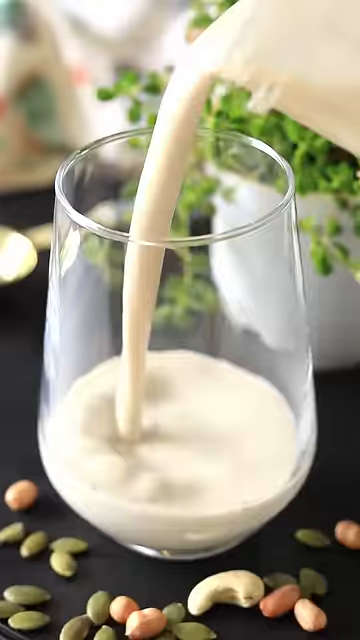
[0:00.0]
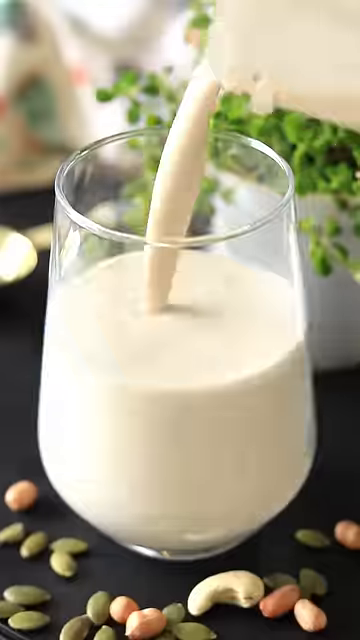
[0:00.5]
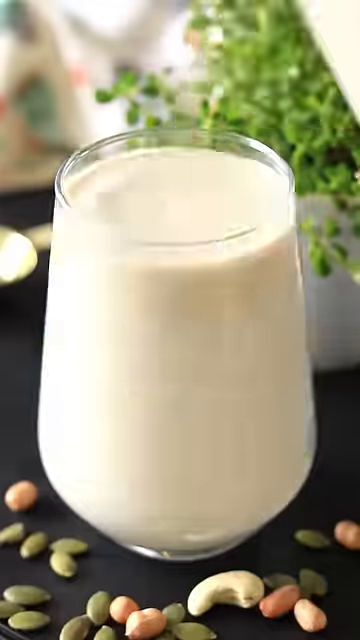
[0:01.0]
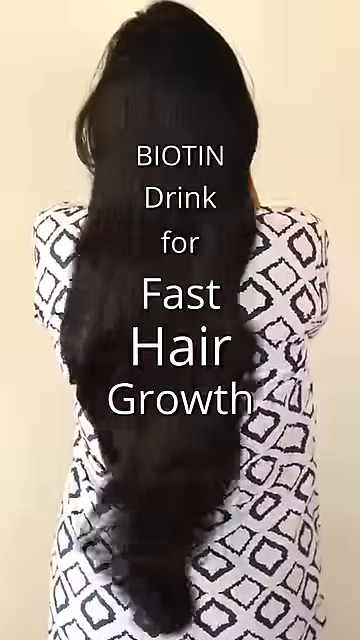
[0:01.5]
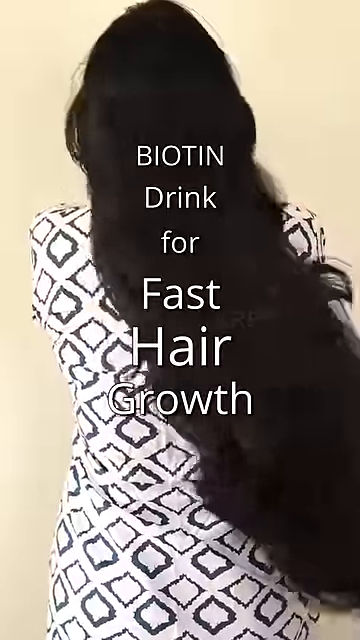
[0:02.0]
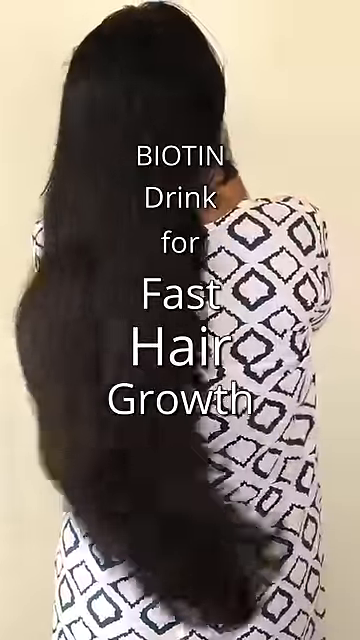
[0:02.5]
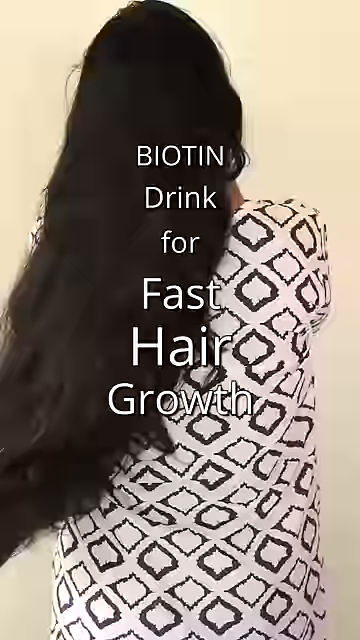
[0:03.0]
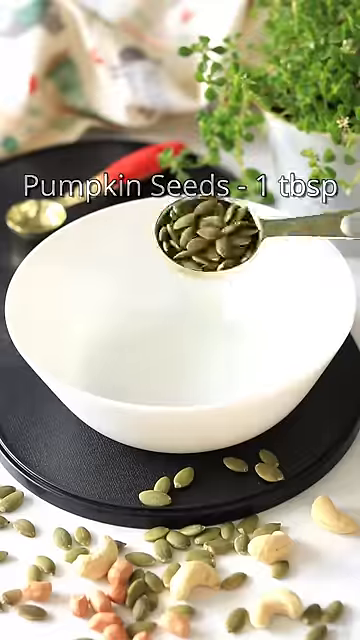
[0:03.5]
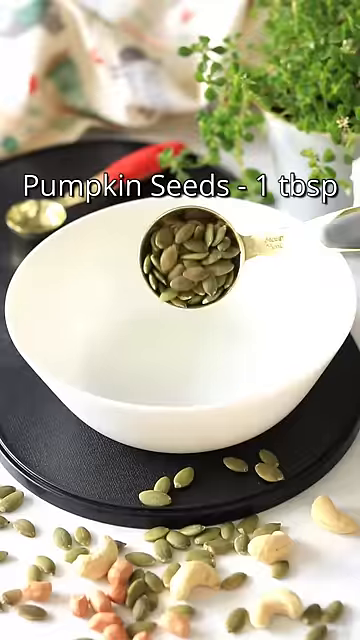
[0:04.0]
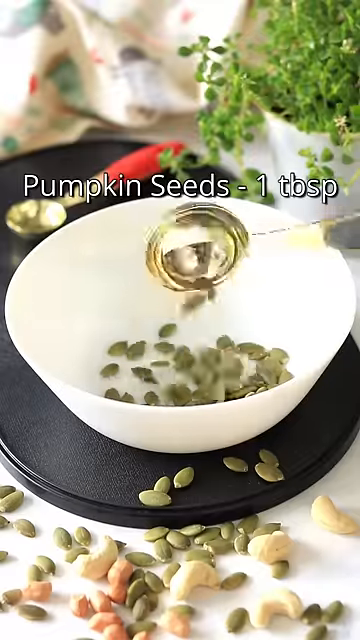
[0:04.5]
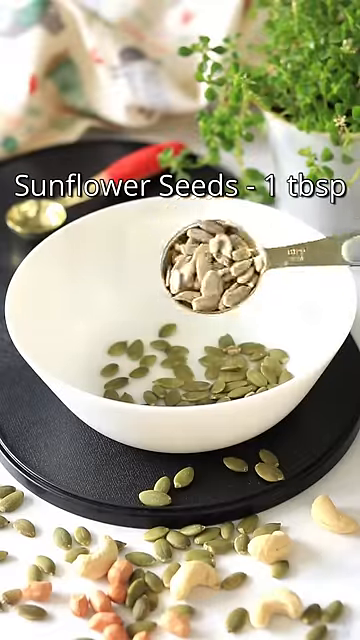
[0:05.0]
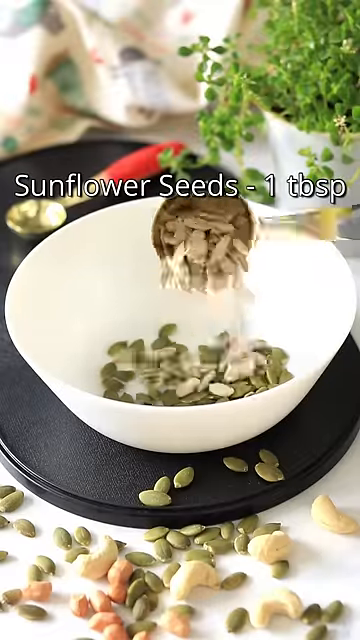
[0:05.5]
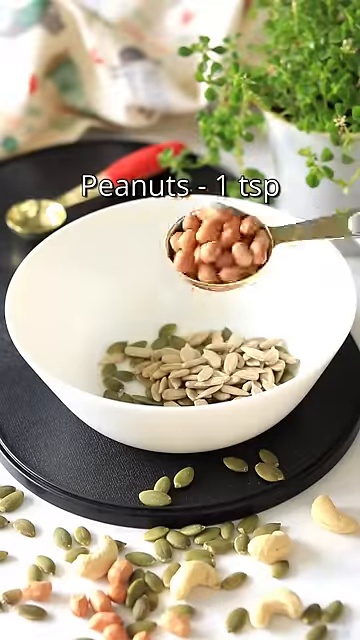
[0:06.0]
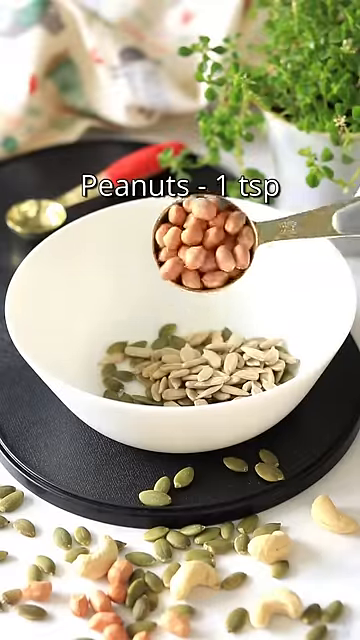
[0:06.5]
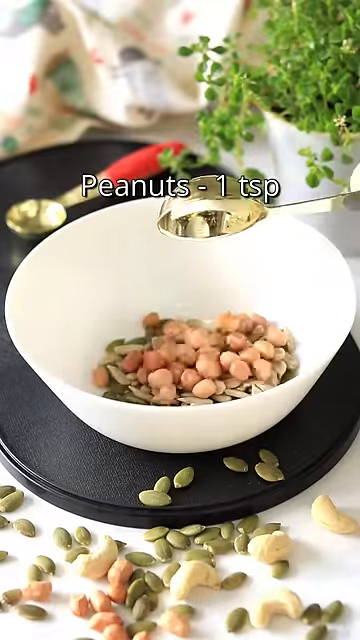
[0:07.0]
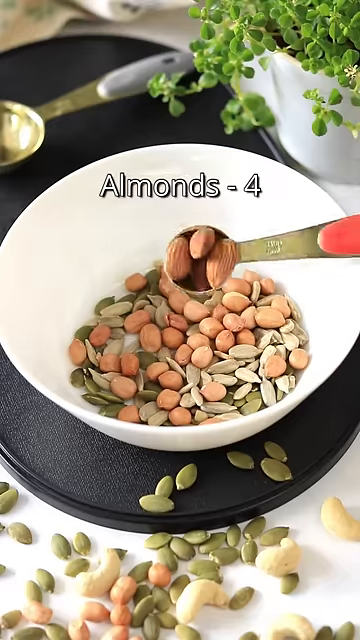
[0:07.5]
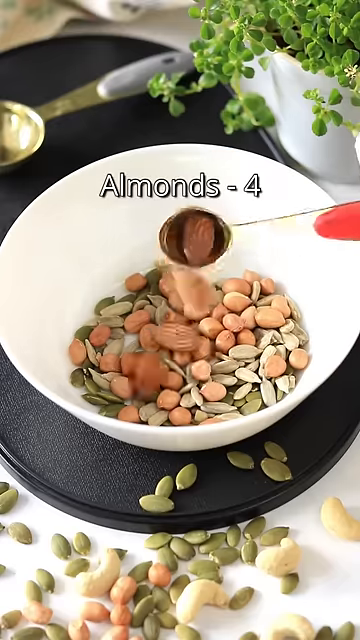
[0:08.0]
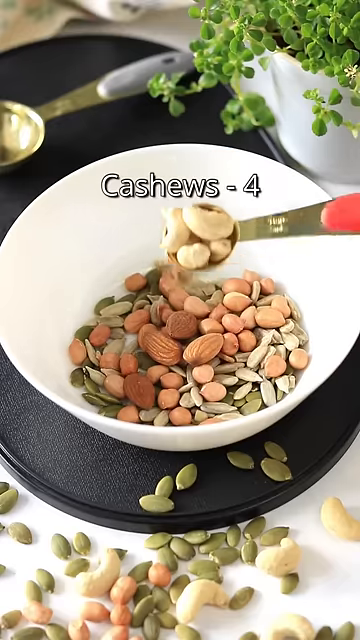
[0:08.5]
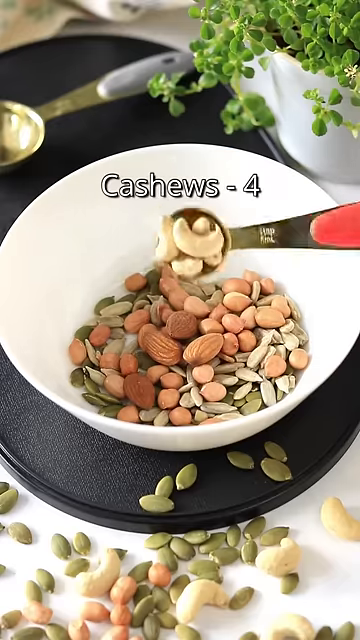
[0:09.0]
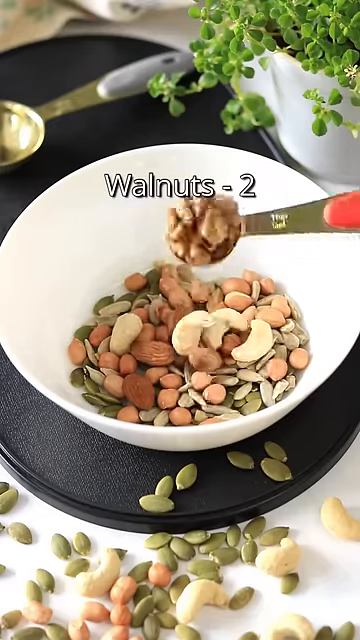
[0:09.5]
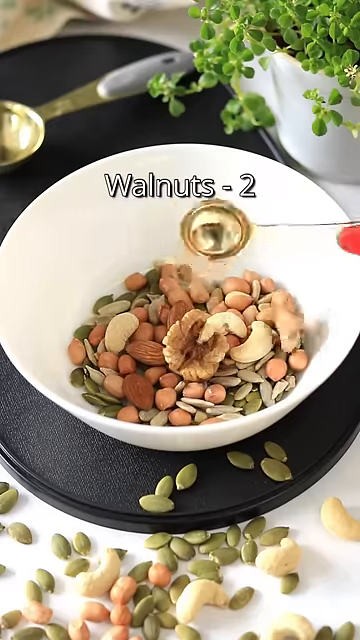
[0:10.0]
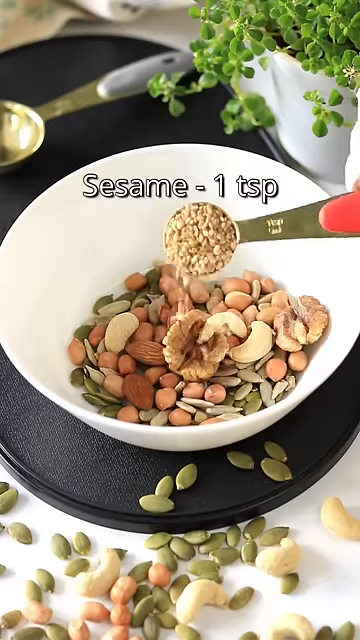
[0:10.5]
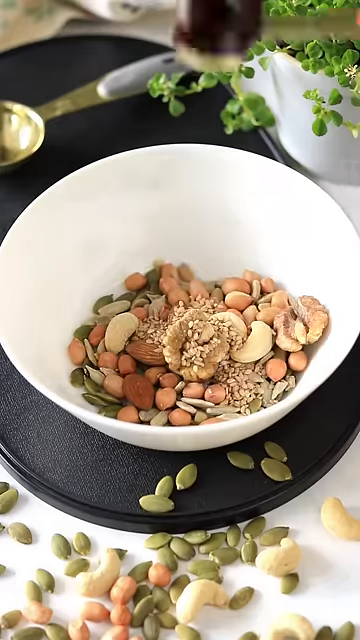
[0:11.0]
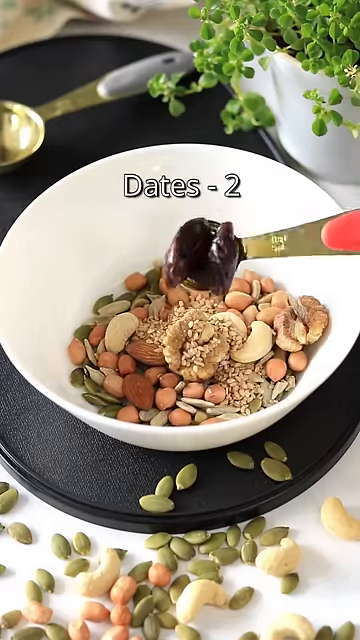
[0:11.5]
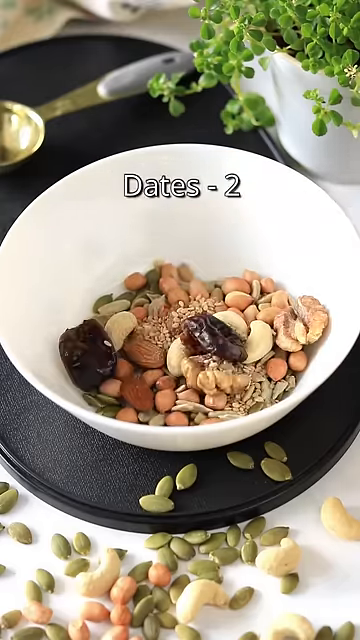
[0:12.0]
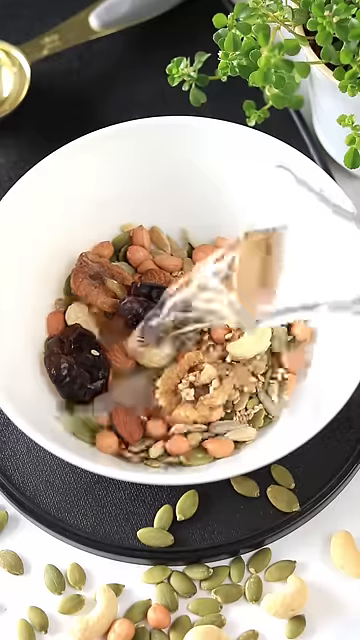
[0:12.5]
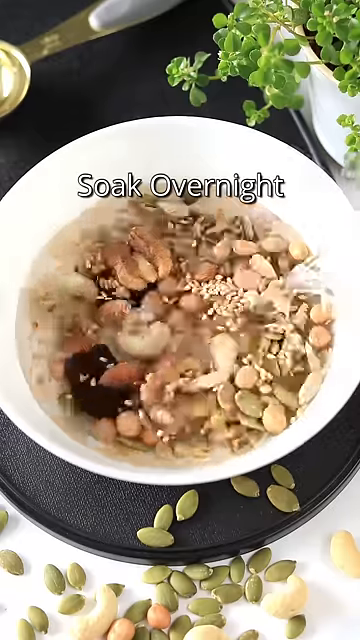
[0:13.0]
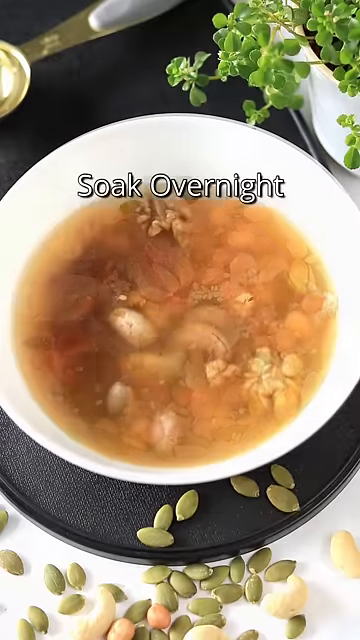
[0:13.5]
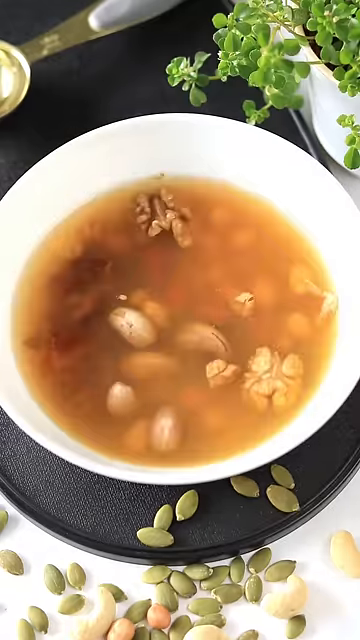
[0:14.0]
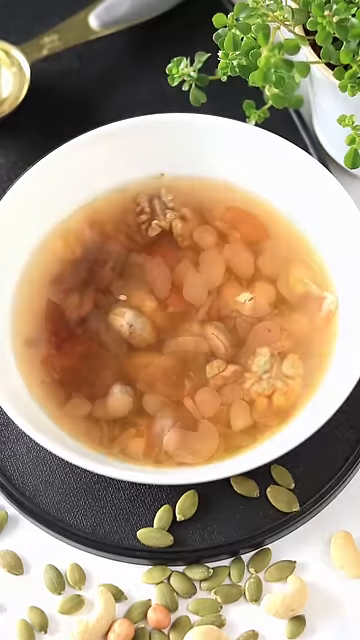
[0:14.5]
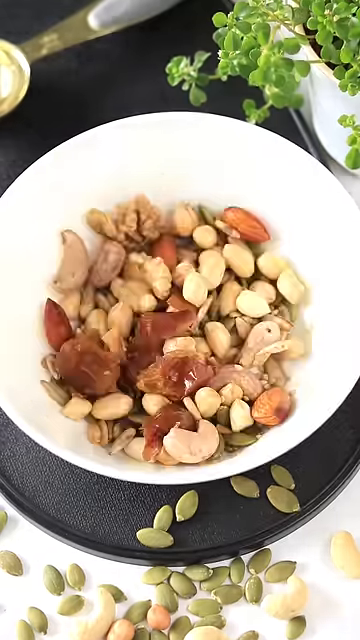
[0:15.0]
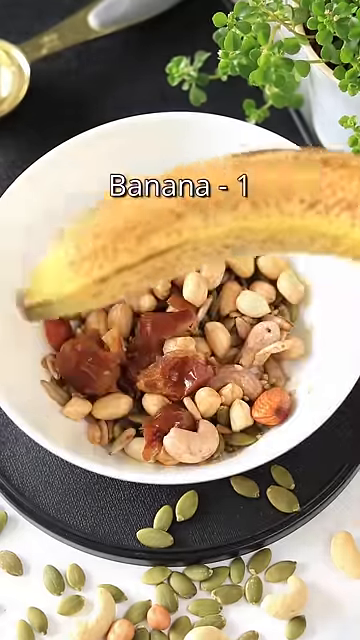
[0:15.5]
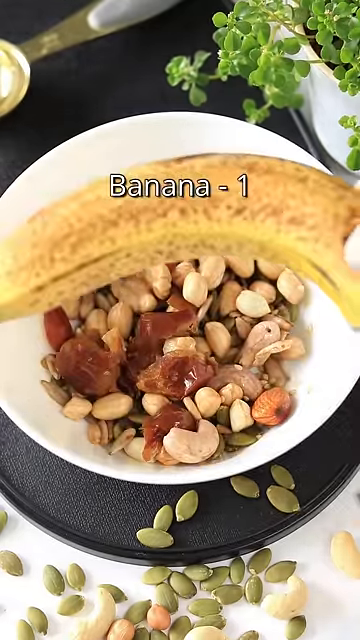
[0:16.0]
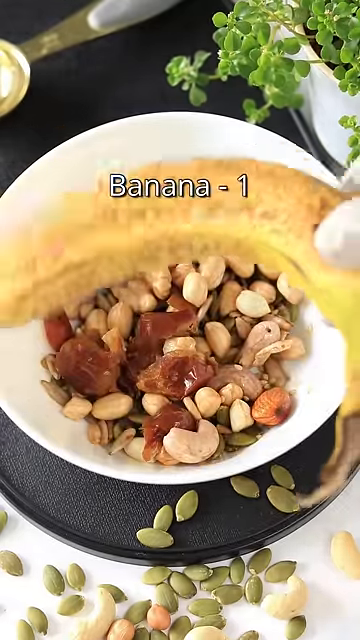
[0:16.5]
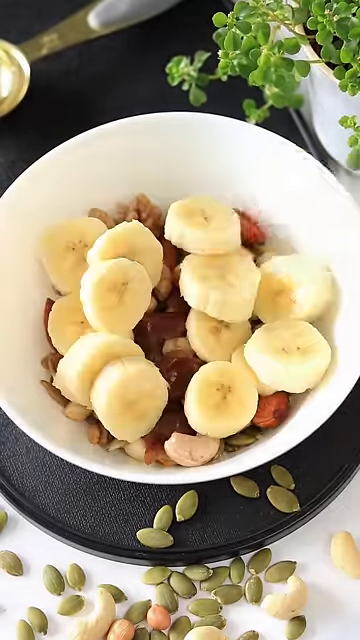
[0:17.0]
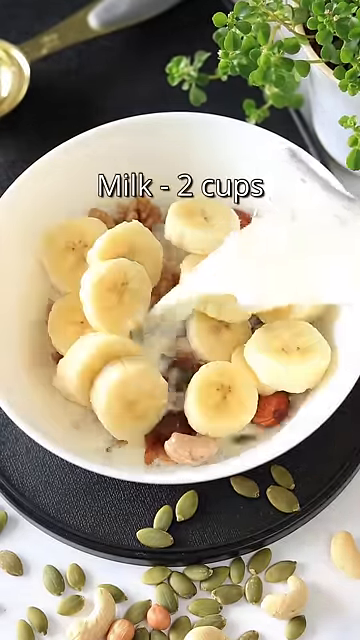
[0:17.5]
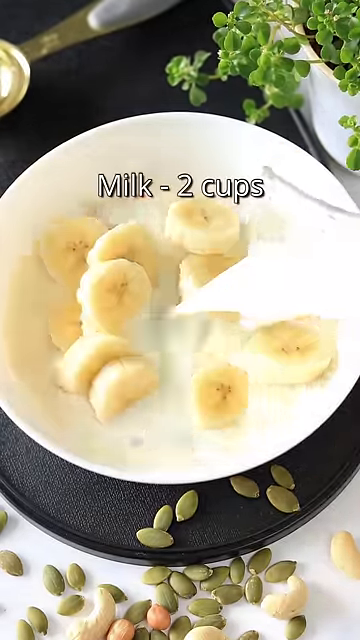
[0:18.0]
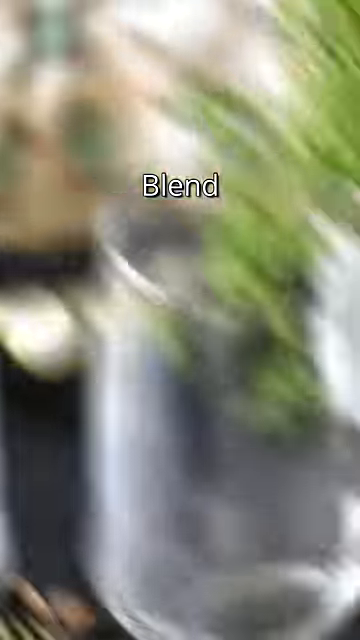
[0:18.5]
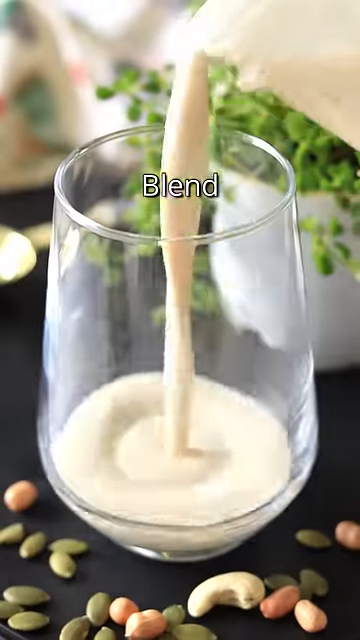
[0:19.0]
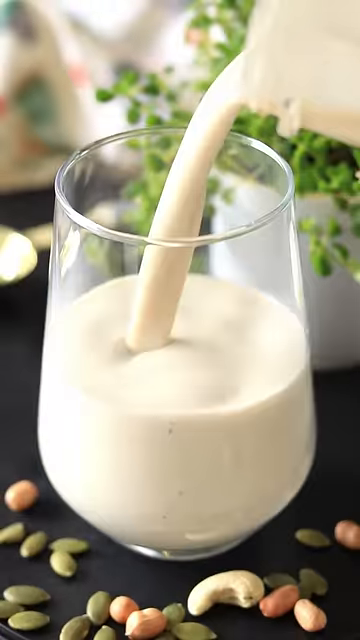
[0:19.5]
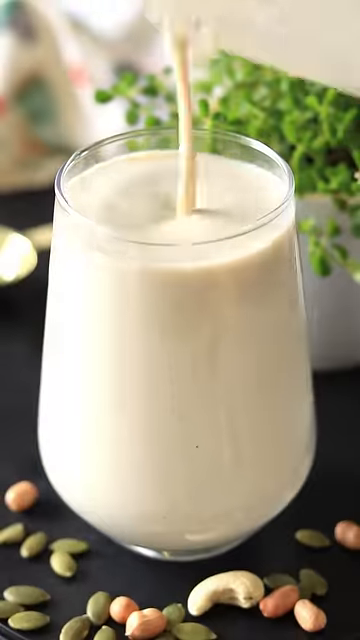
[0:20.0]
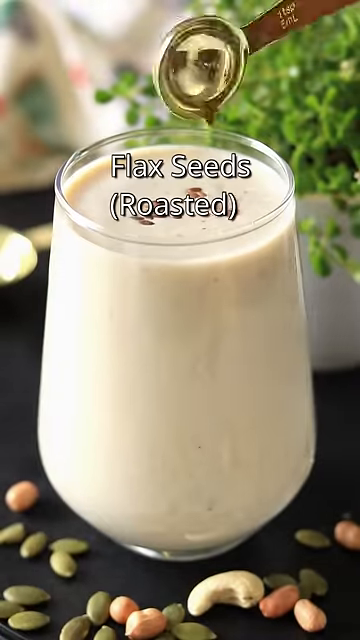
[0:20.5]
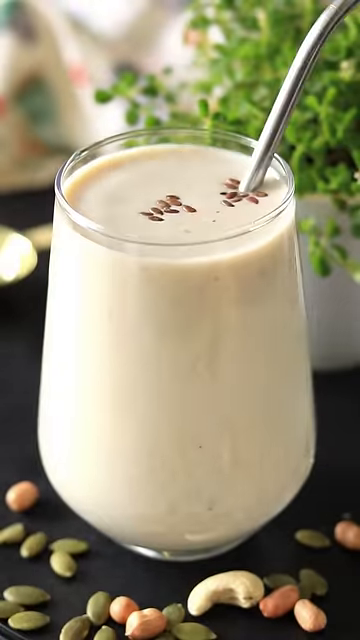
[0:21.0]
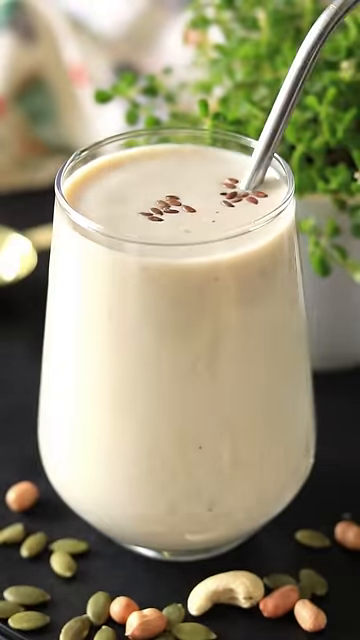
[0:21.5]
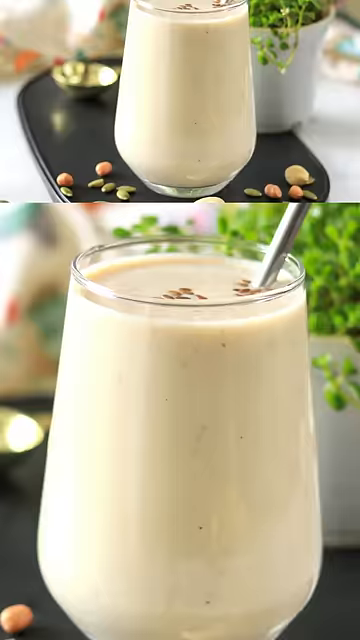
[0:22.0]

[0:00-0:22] Someone pours a glass of milk. Next to it is a bunch of nuts, including cashews, almonds and pumpkin seeds, on a dark table, and there is a green plant with a short, white-ish vase next to it. After the glass is poured, the back of someone's head is seen, showing really long, black-brown hair; the person wears a white dress with blue diagonal squares or triangles. Text reads "biotin drink for fast hair growth." A white bowl is shown on a plate that seems to be black, with a measuring spoon with an apparently red handle next to it and another measuring spoon holding pumpkin seeds, one tablespoon. Text then reads "sunflower seeds, one tablespoon," with sunflower seeds in the spoon, followed by "peanuts, one teaspoon," with the peanuts shown. Almonds are shown, four in the small measuring spoon, then text reads "cashews," with four in the measuring spoon, and they are dumped into the bowl. Next come walnuts, two in the measuring spoon; sesame, one teaspoon; and dates, two. Water is added and the mixture soaks overnight, then a cut-up banana is added and two cups of milk are mixed in. Finally the drink is shown being poured, with roasted flaxseeds on top.